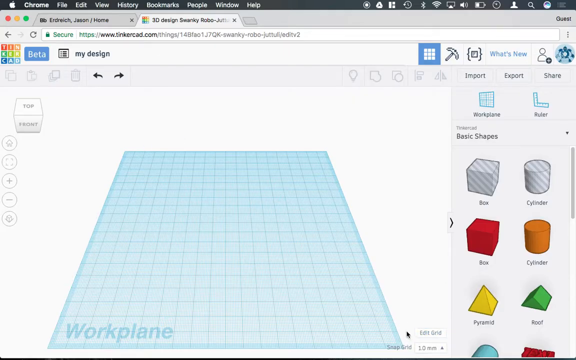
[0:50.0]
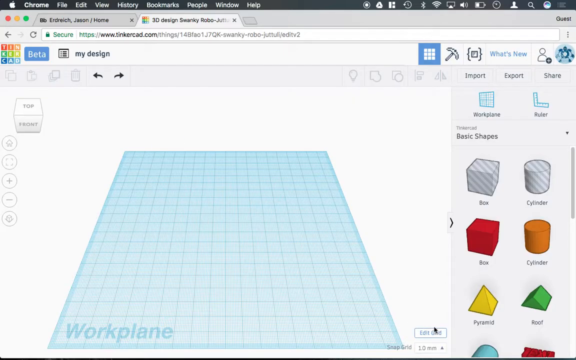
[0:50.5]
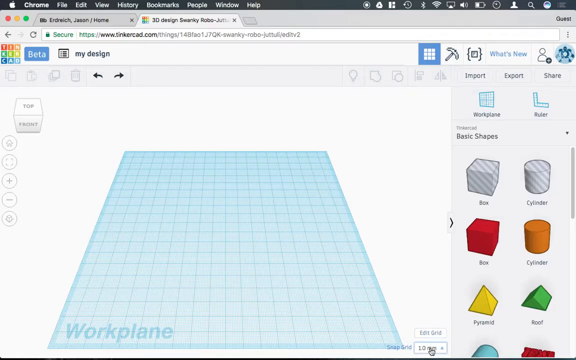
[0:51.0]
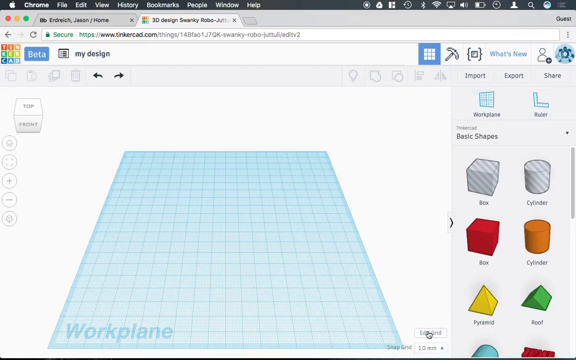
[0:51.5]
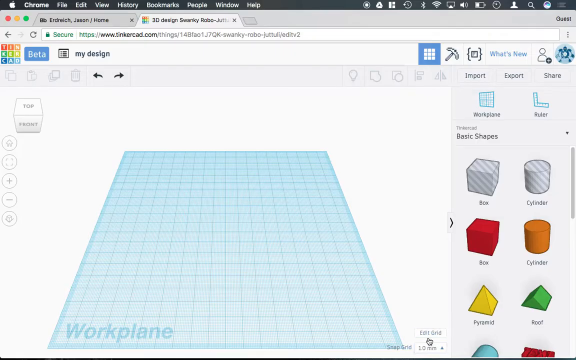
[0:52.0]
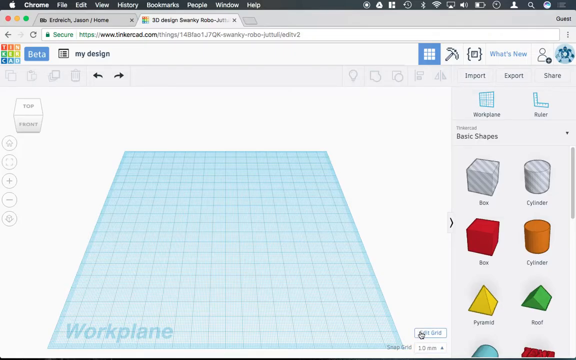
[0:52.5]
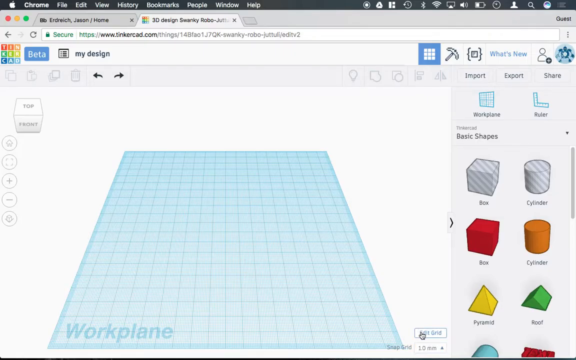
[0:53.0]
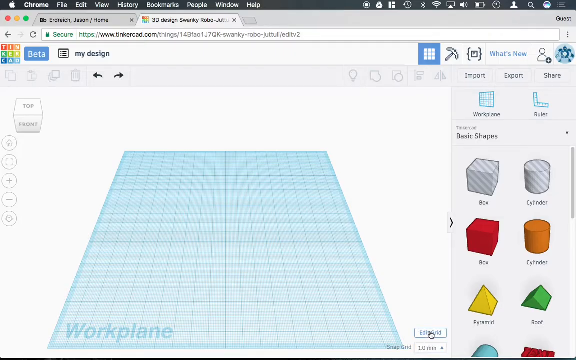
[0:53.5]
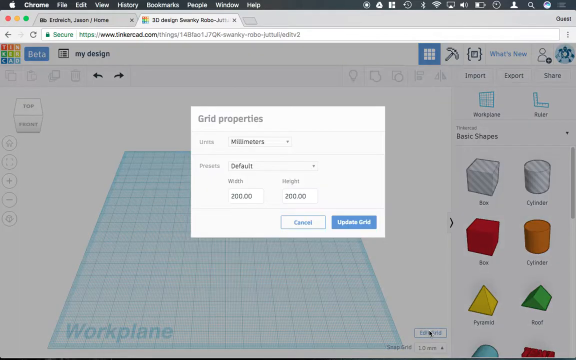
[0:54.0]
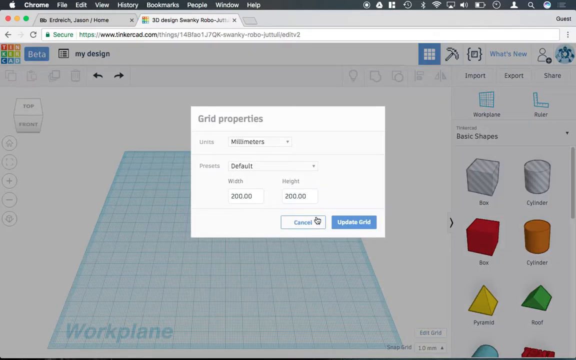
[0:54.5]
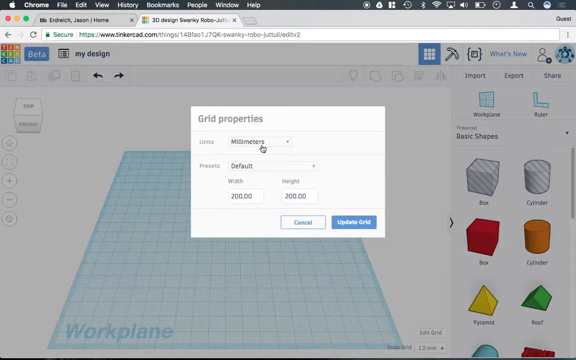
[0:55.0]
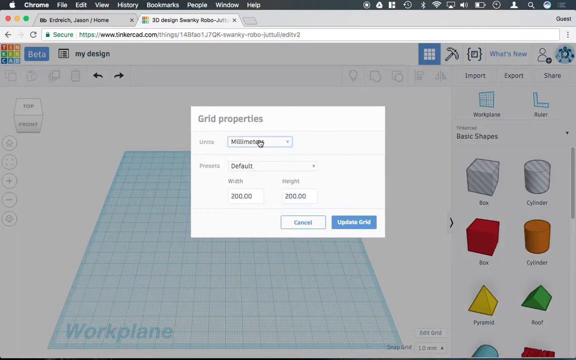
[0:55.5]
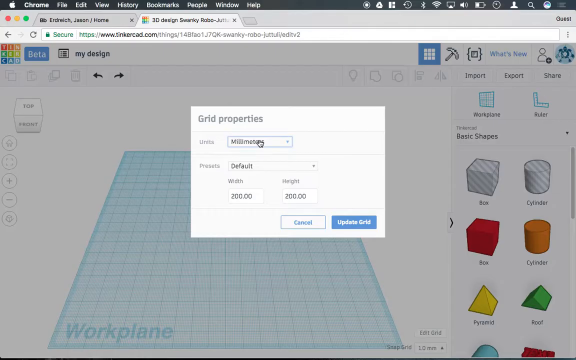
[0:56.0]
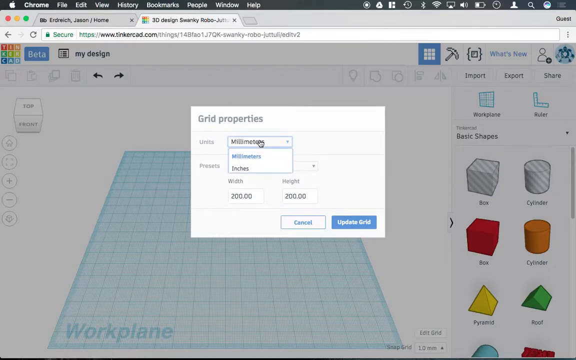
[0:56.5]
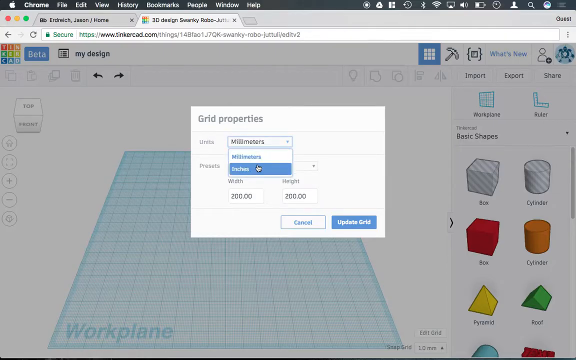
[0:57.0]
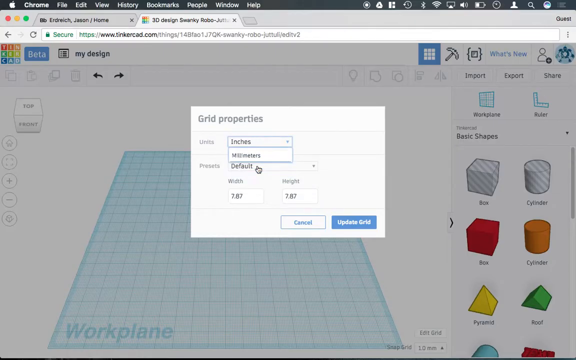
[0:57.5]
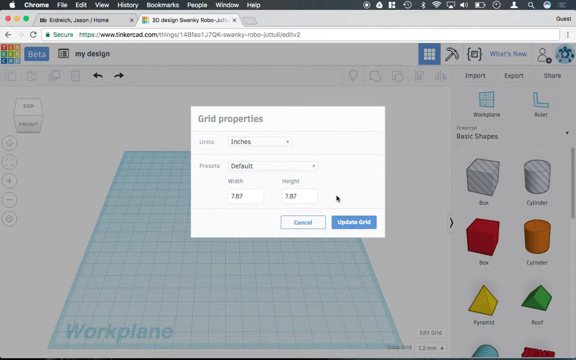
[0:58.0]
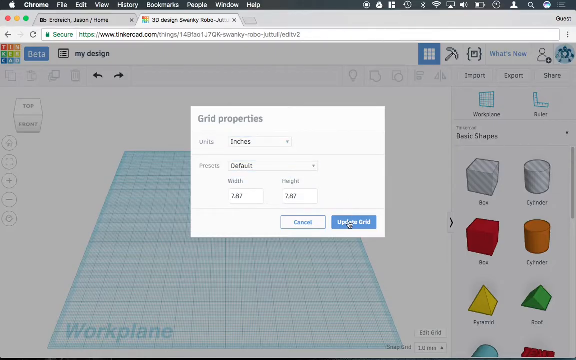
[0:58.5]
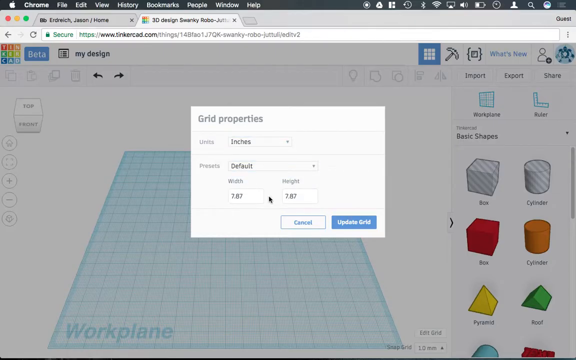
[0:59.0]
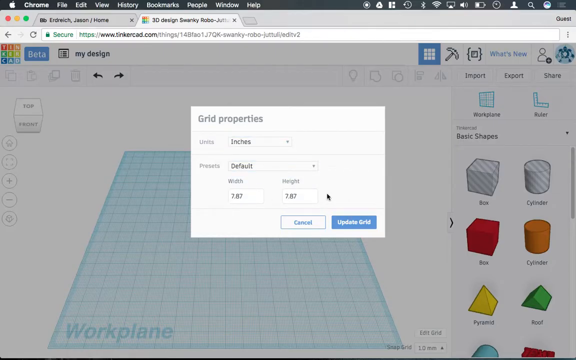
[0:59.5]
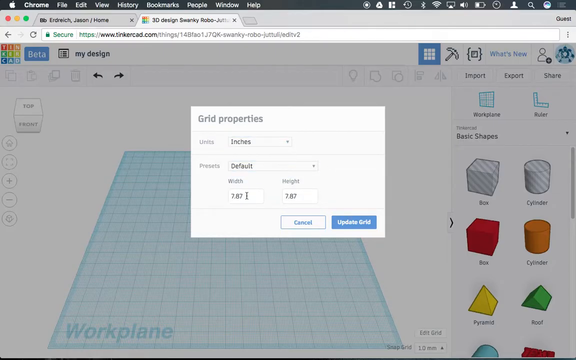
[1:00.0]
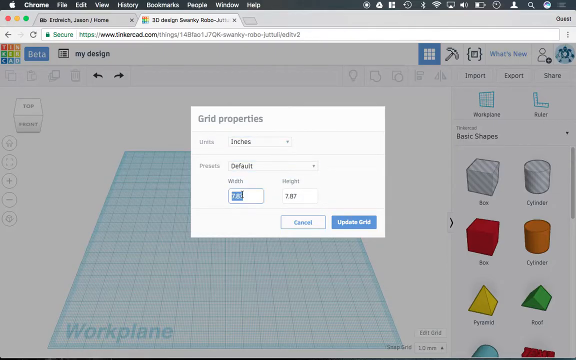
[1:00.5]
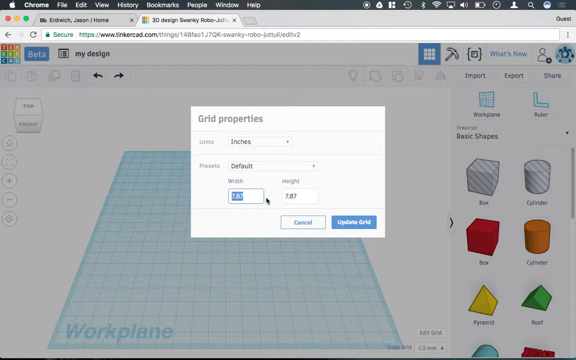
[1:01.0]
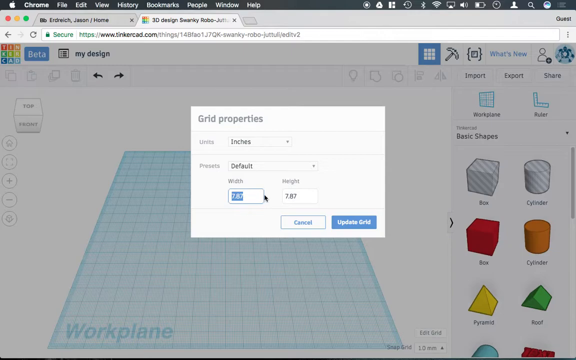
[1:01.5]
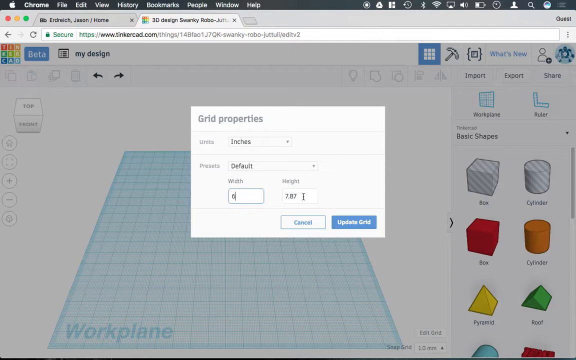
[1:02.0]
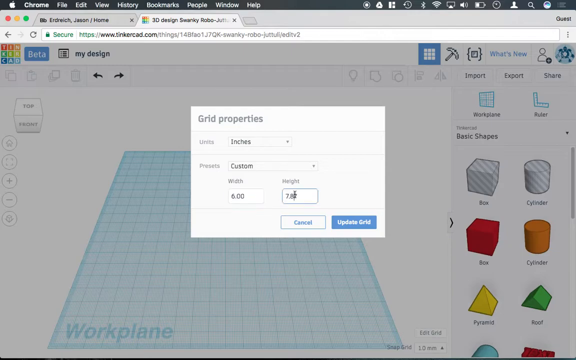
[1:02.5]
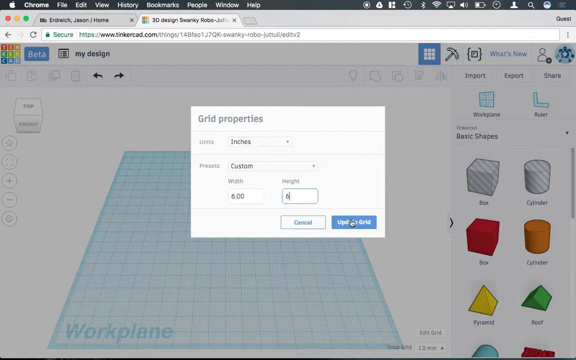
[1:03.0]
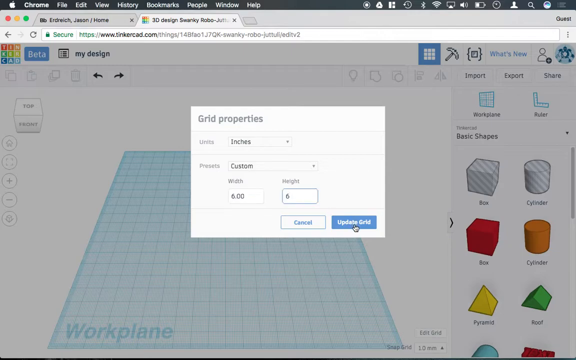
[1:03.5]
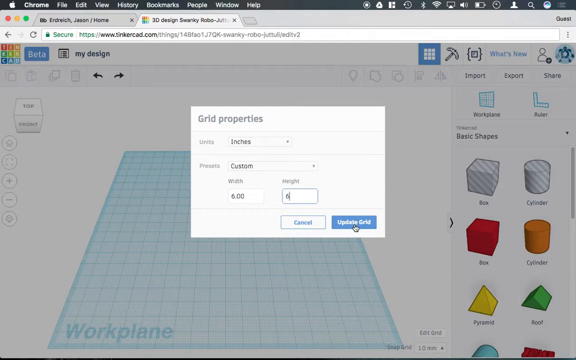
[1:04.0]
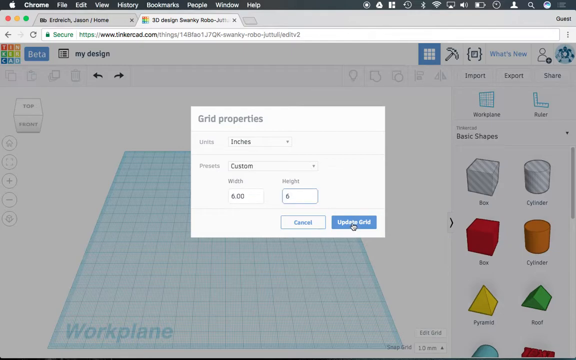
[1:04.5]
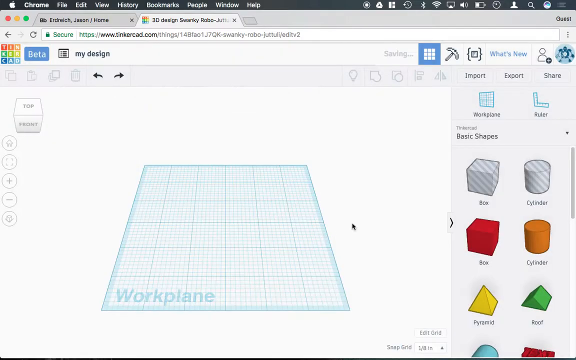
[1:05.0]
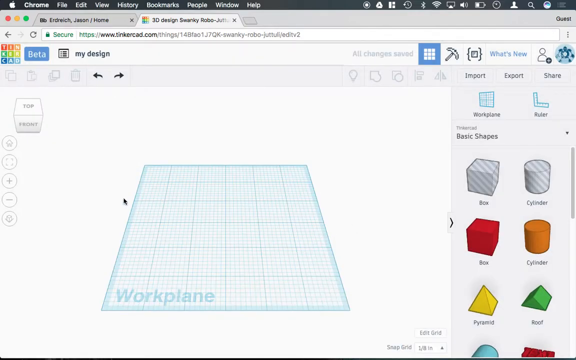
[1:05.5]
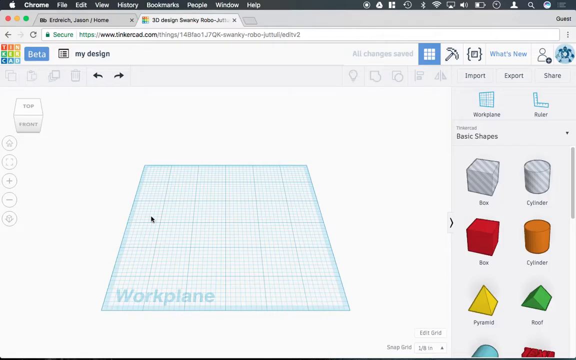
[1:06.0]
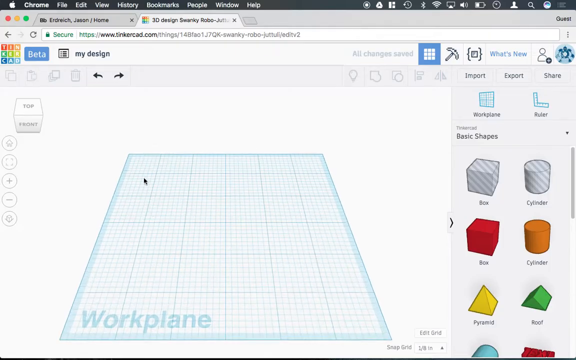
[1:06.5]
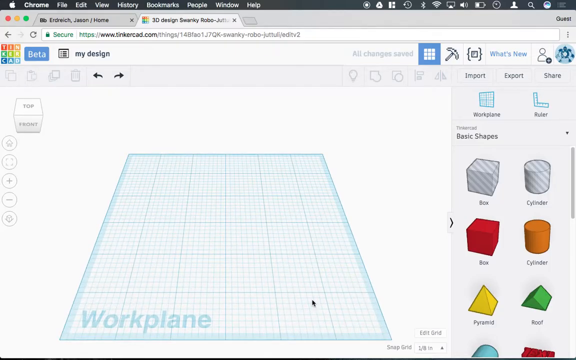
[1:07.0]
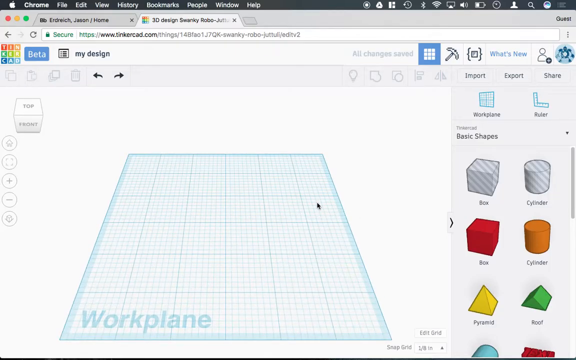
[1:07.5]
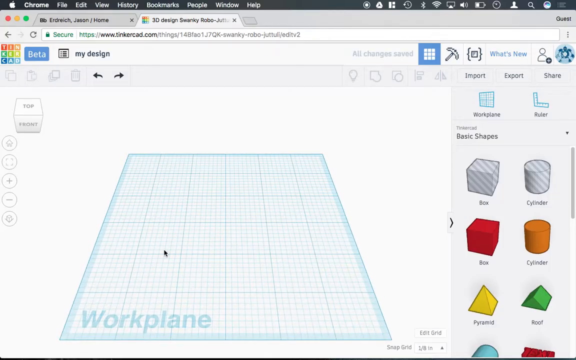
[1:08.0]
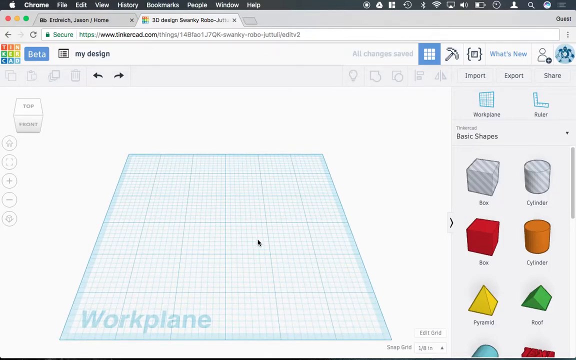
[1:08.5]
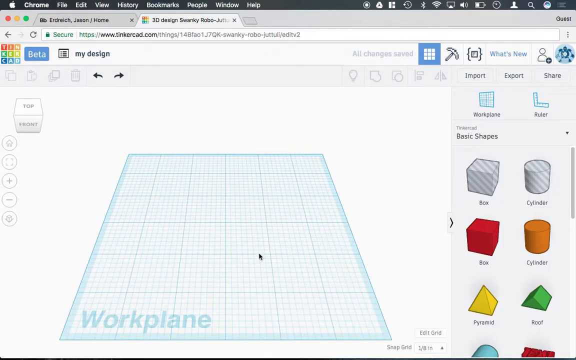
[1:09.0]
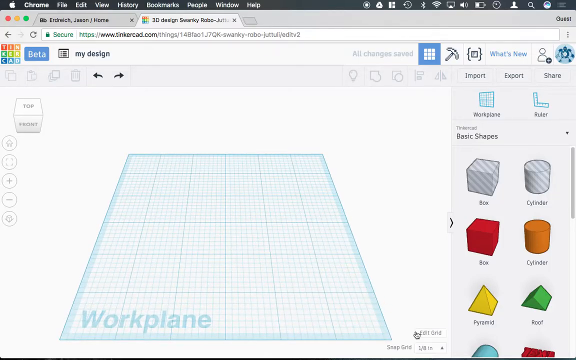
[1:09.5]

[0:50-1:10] The user clicks on the edit grid function in the bottom right-hand corner of the workspace, near the bottom right-hand corner of the screen. A pop-up labeled "grid properties" appears, showing two options with drop-down menus; the first is units, with the options inches and millimeters, and there is also a preset section for differing height and width settings. The user sets a custom preset of 6 inches in width and 6 inches in height and applies the settings, altering the dimensions of the work plane grid. There is also an option to cancel in the edit grid menu. The user then scrolls on the laptop or mouse to zoom into the image.